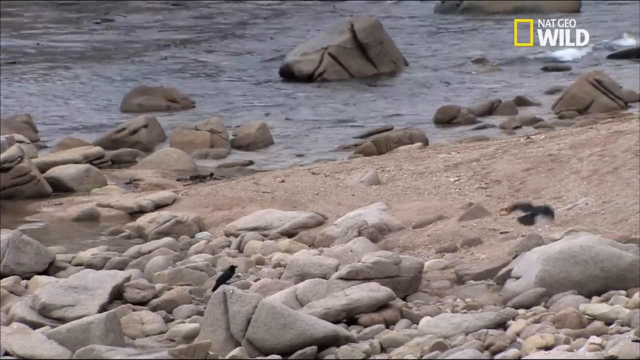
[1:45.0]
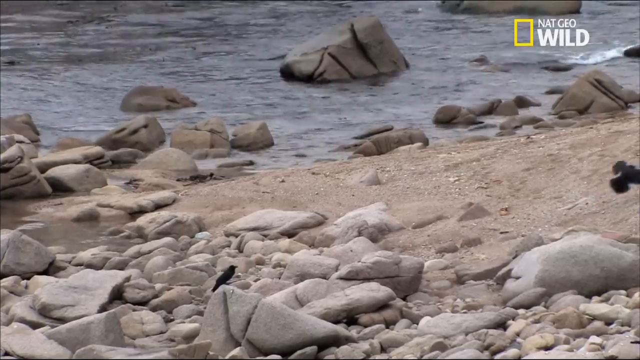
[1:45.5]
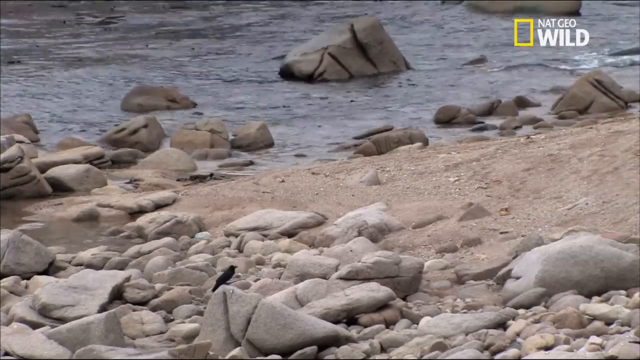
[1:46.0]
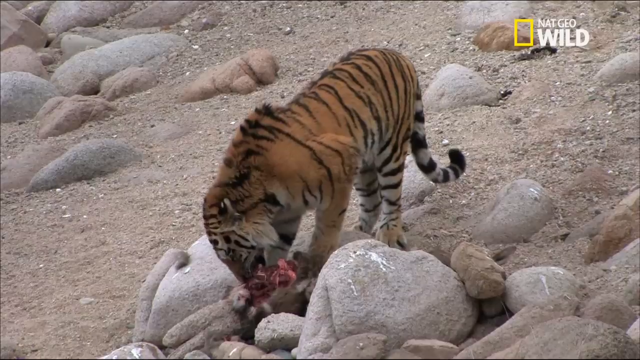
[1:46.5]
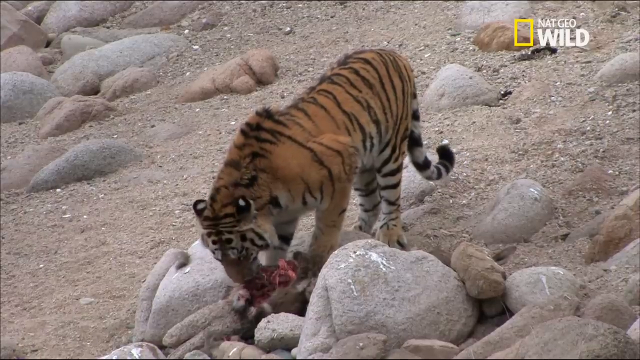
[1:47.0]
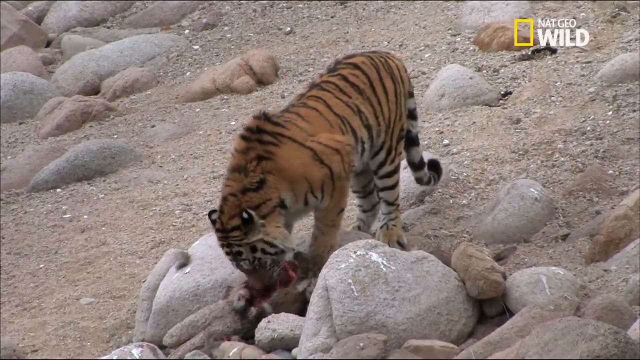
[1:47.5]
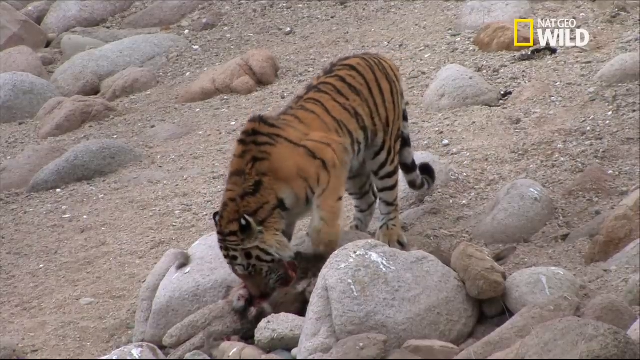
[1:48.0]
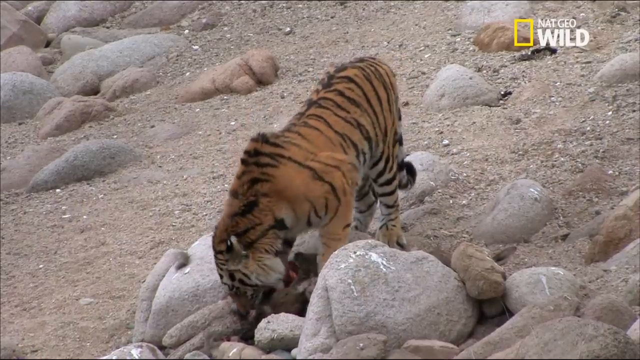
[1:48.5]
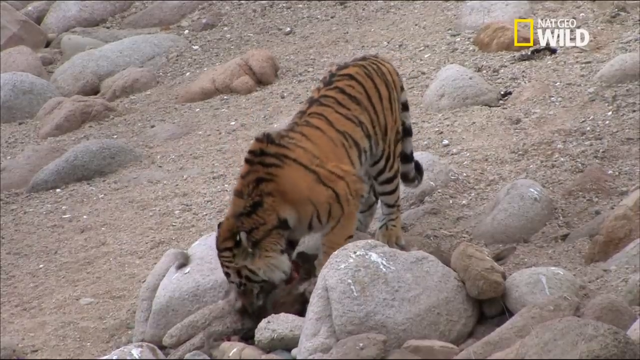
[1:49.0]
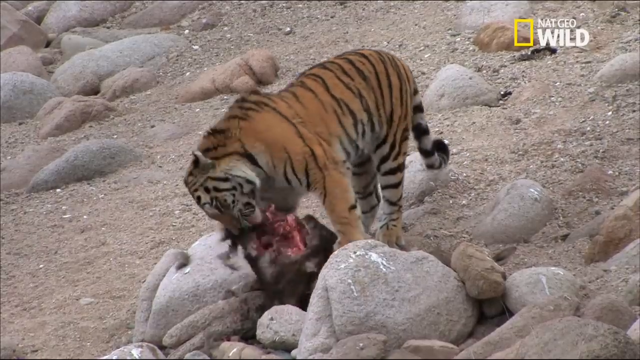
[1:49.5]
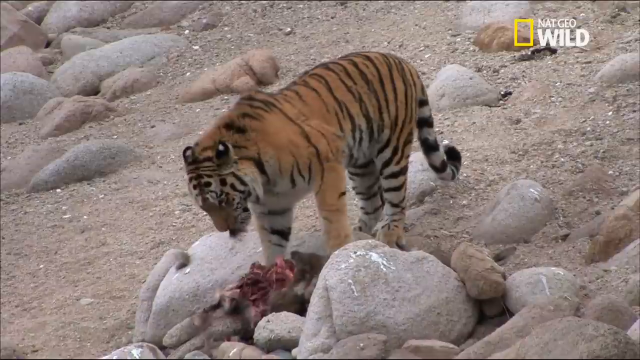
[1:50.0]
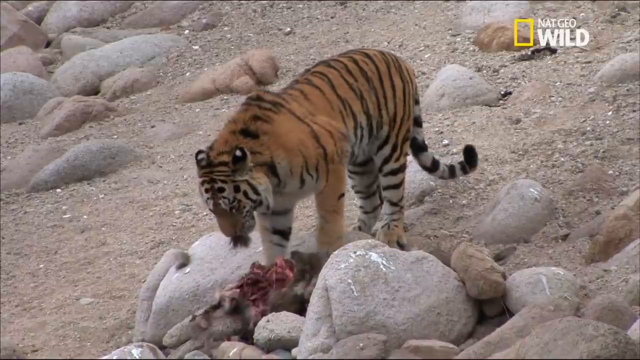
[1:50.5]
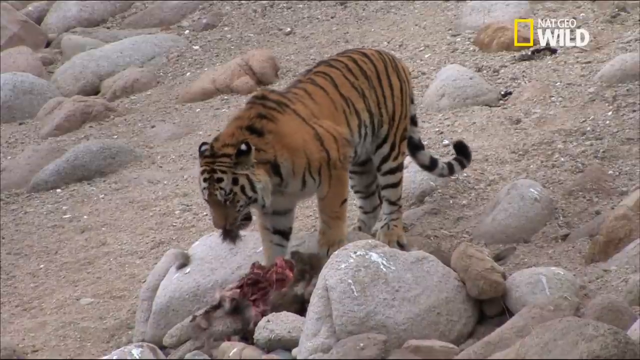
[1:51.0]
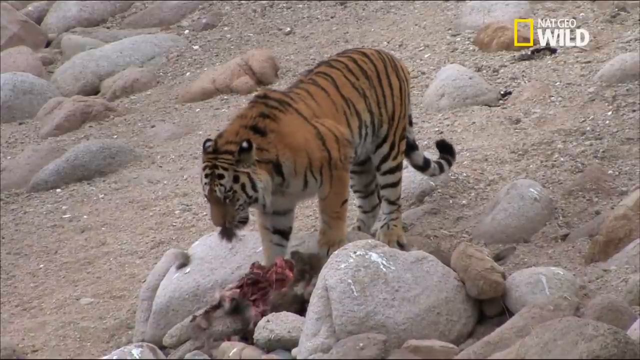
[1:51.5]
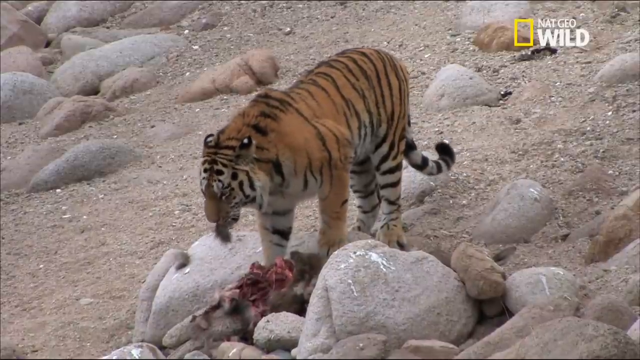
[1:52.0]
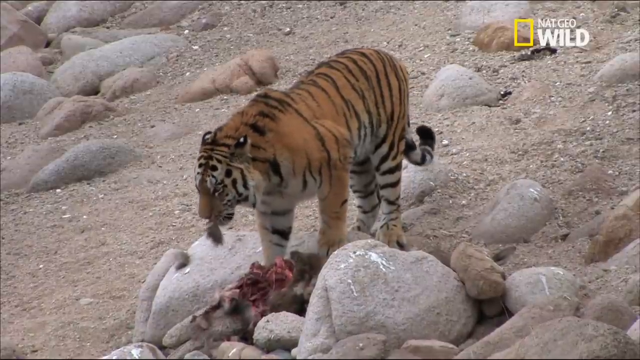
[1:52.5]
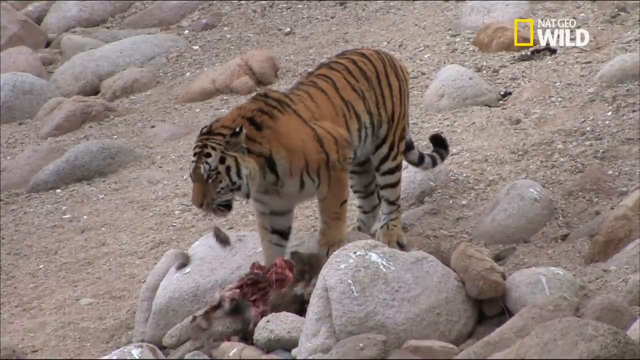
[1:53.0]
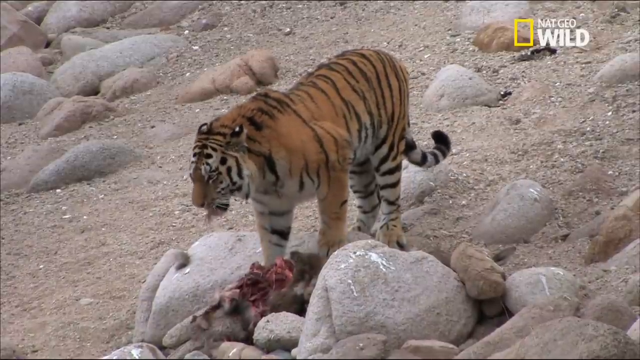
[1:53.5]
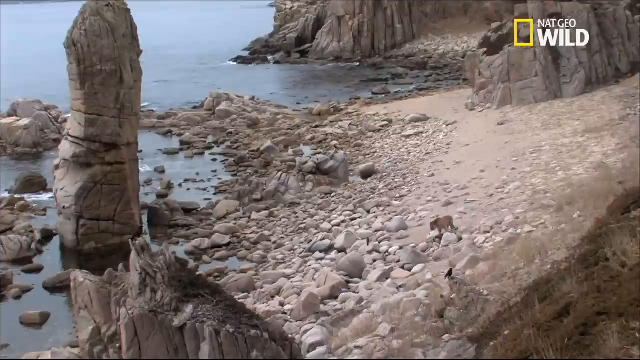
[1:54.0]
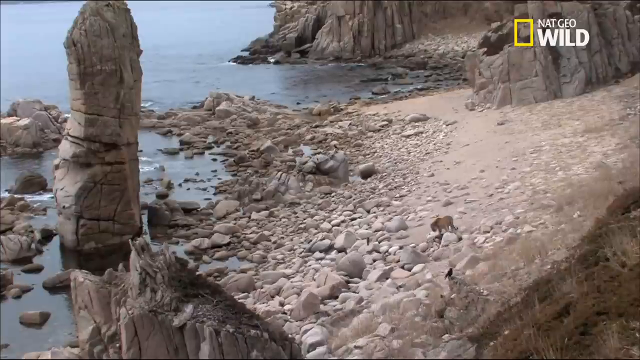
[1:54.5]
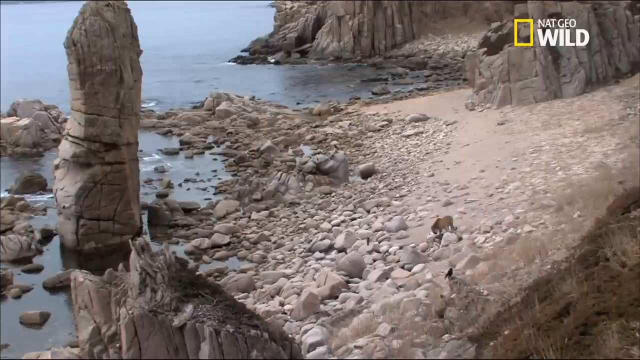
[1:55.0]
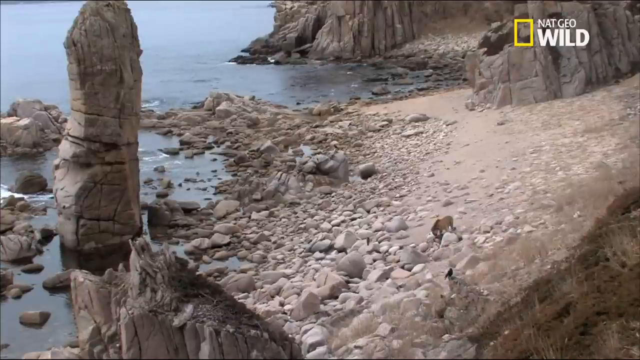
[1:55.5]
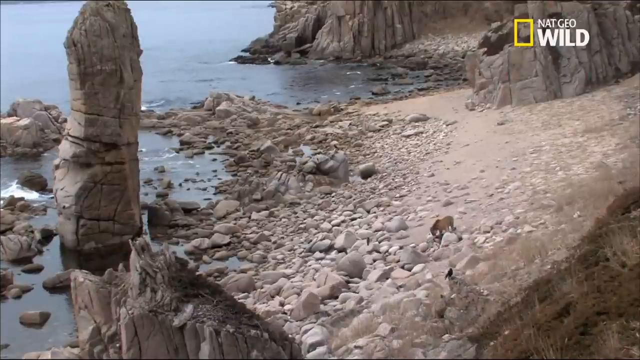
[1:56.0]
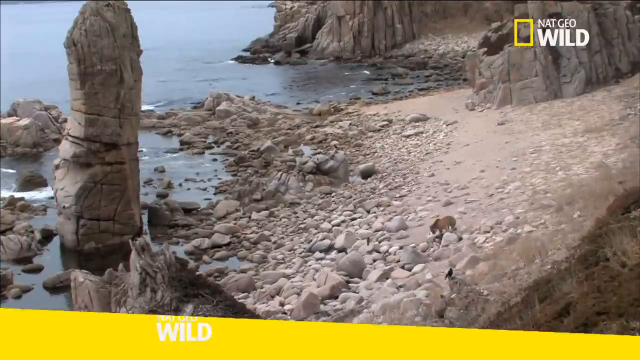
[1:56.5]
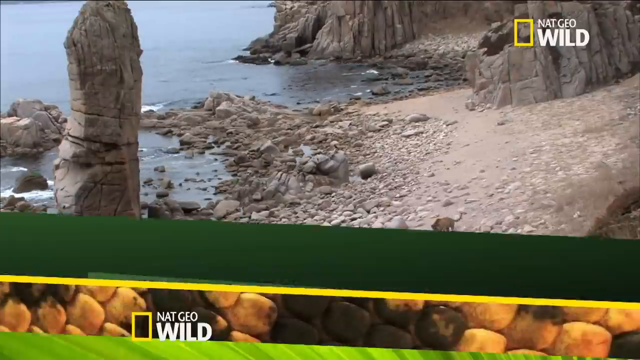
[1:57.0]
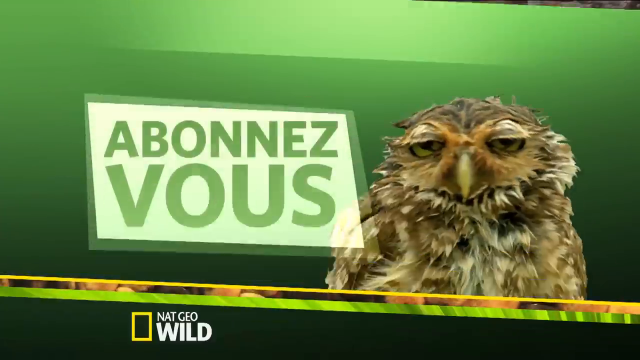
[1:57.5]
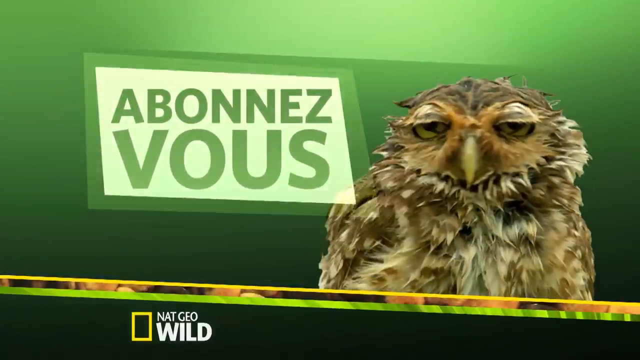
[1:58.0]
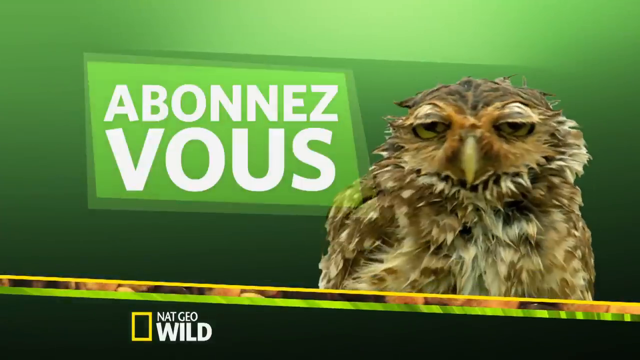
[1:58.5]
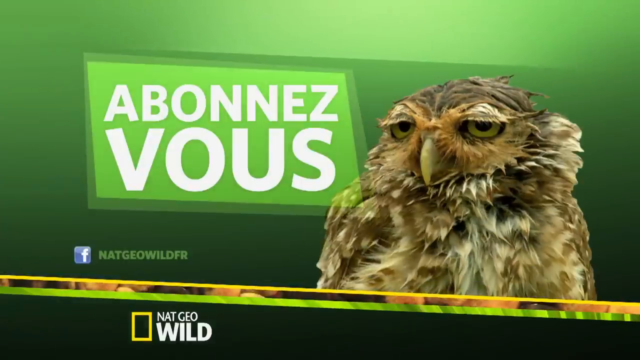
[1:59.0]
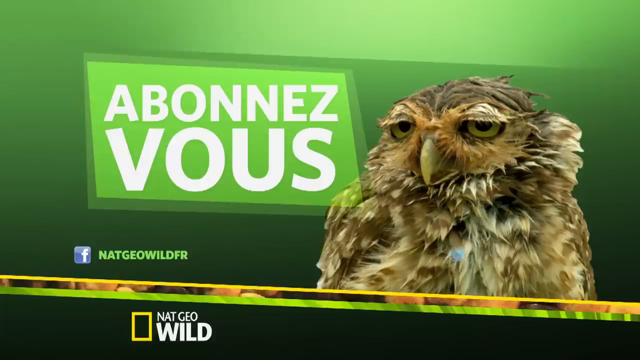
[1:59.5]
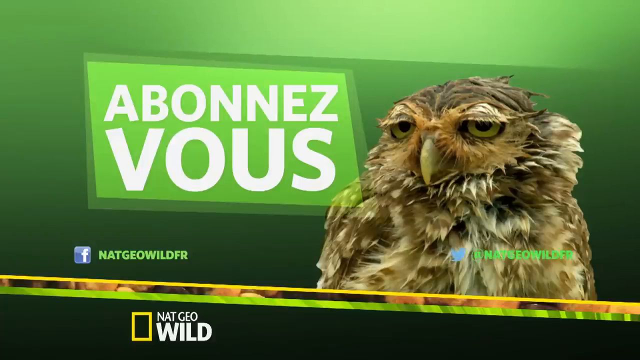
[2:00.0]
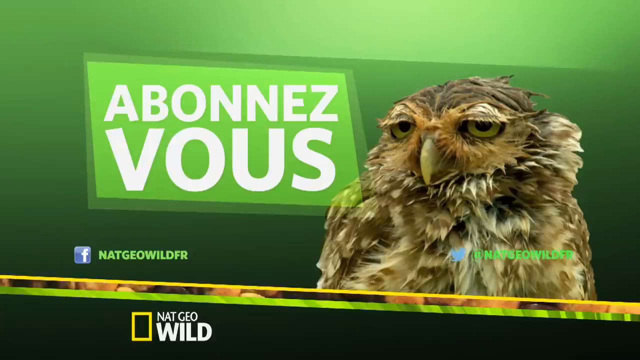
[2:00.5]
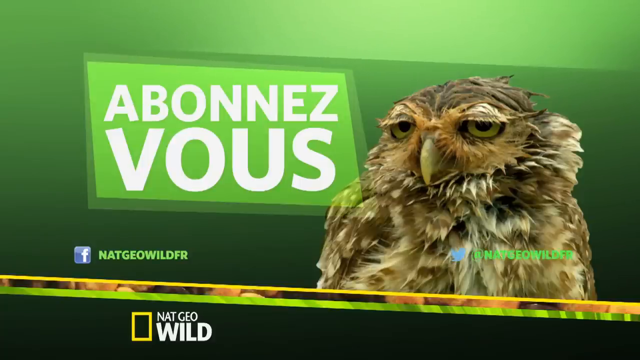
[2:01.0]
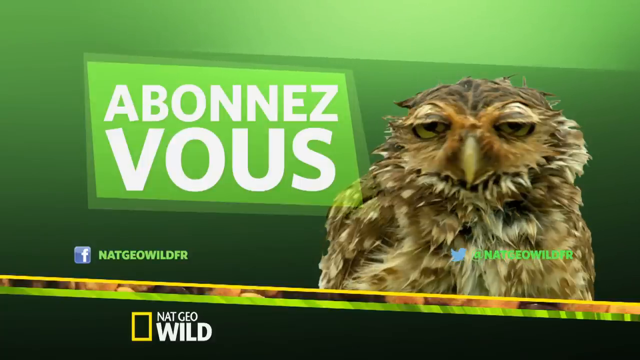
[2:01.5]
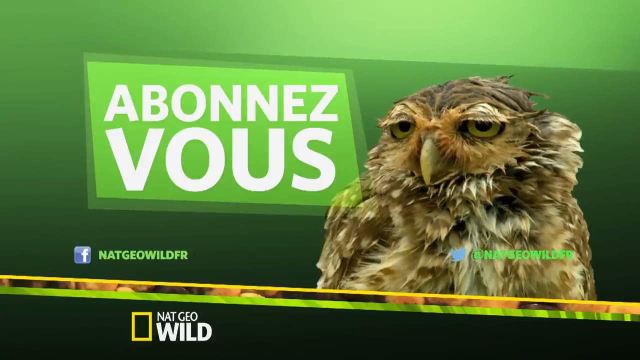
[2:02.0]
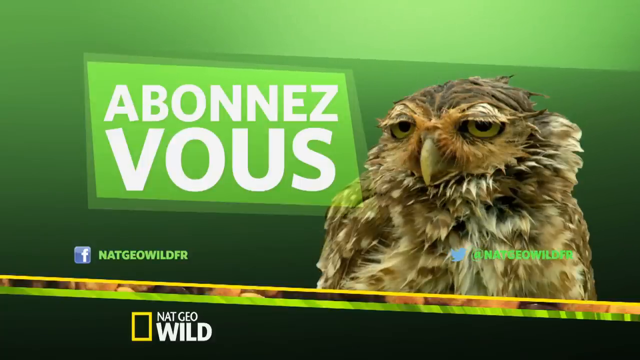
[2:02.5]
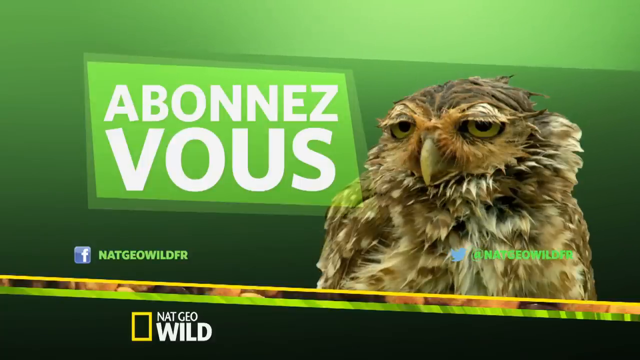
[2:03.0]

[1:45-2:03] The bird flies to the right and out of frame, and the camera moves back to the tiger, which continues eating the bird, finishes, and looks around. At the end, the tiger seems to be walking away. A green screen follows with a picture of an owl, and underneath the owl is "Nat Geo Wild" with a border. To the left is a green box, and beneath it is a link to a Facebook page.